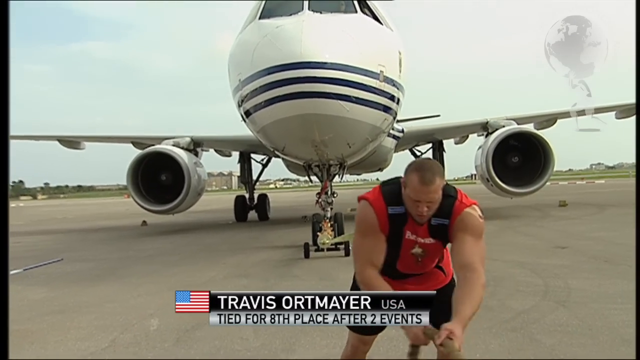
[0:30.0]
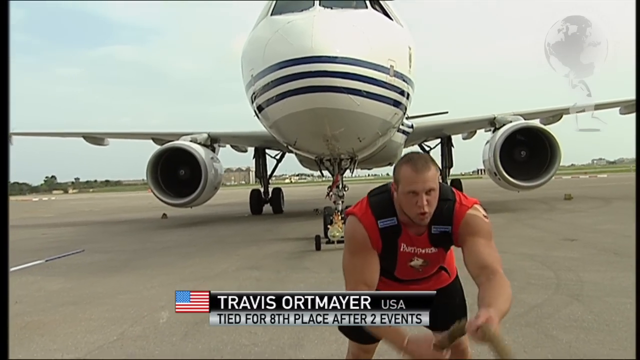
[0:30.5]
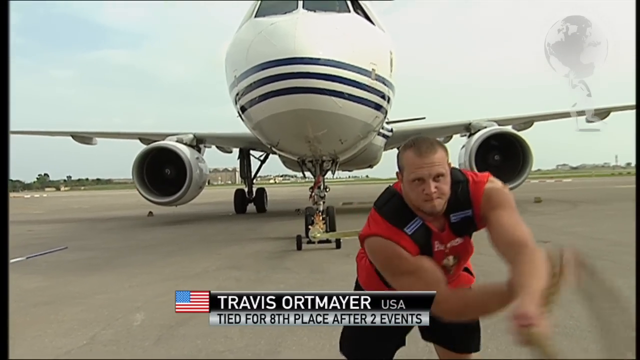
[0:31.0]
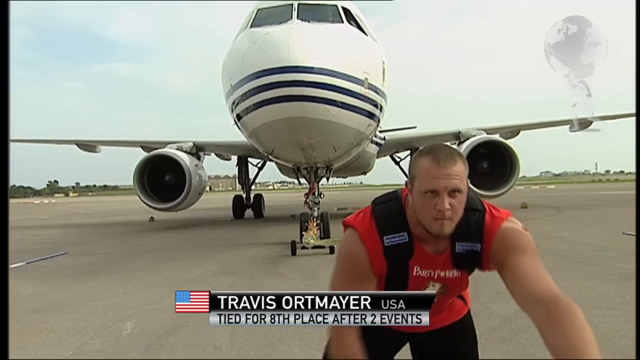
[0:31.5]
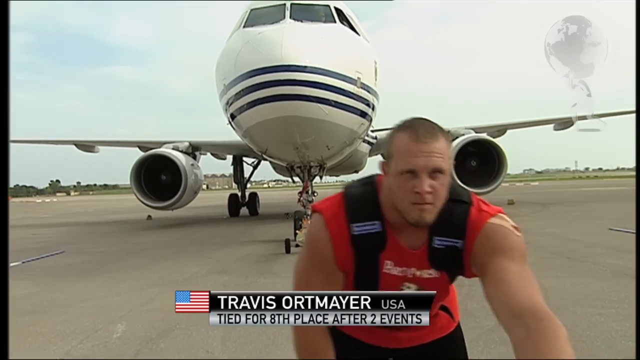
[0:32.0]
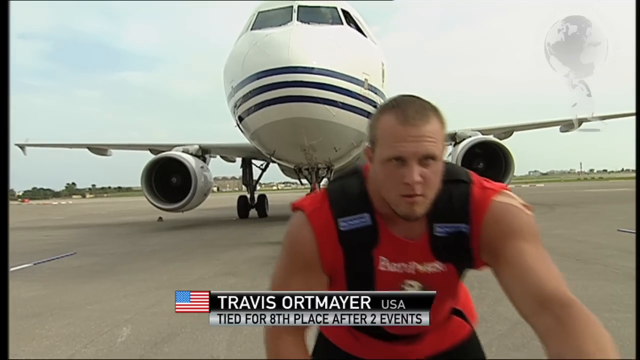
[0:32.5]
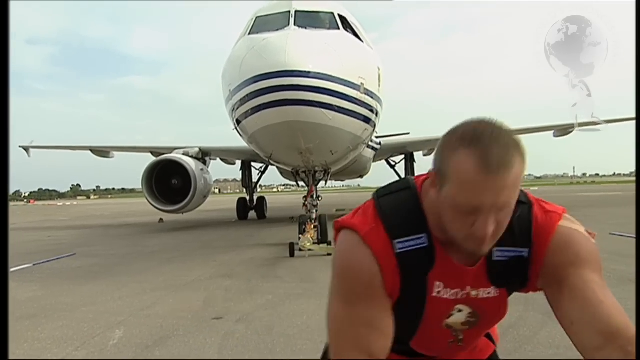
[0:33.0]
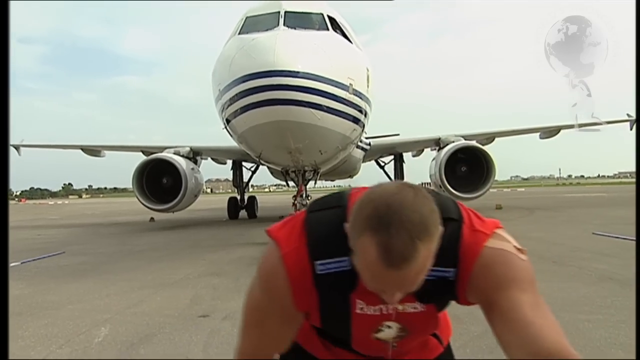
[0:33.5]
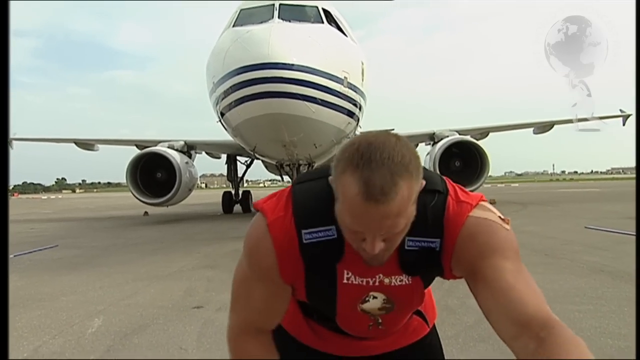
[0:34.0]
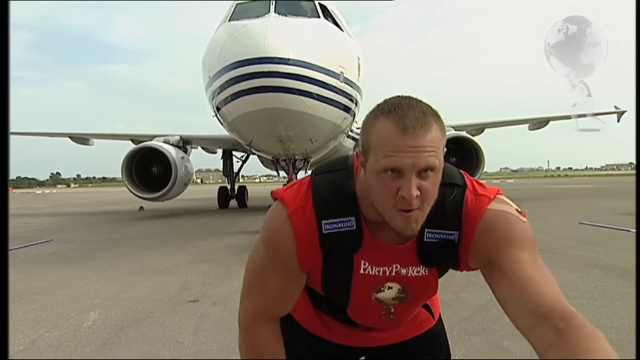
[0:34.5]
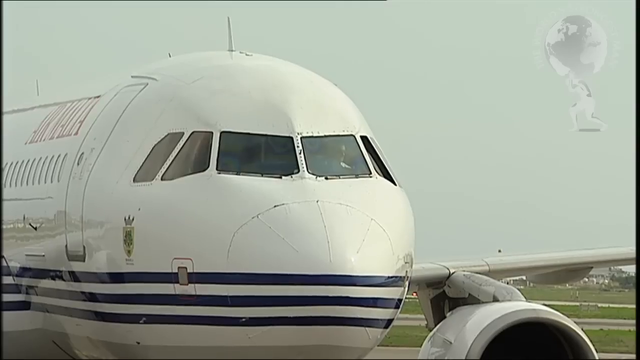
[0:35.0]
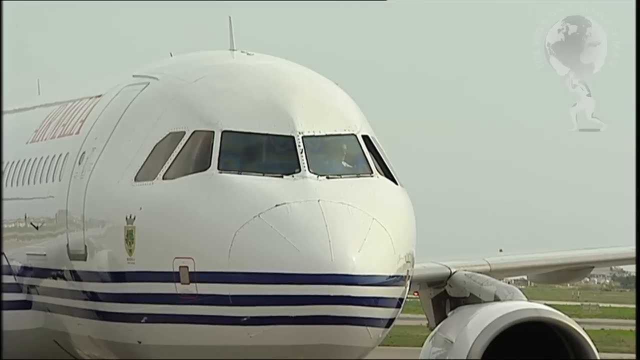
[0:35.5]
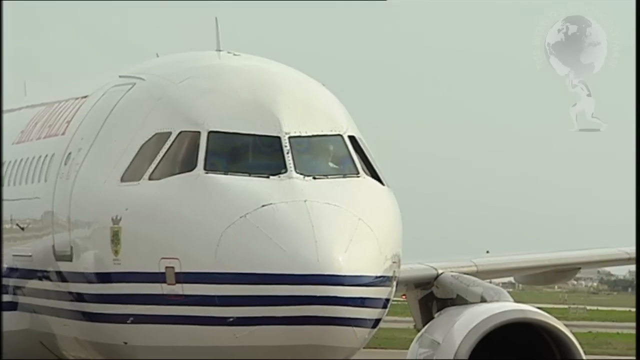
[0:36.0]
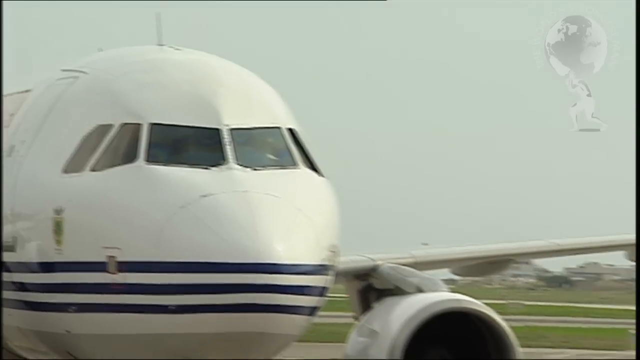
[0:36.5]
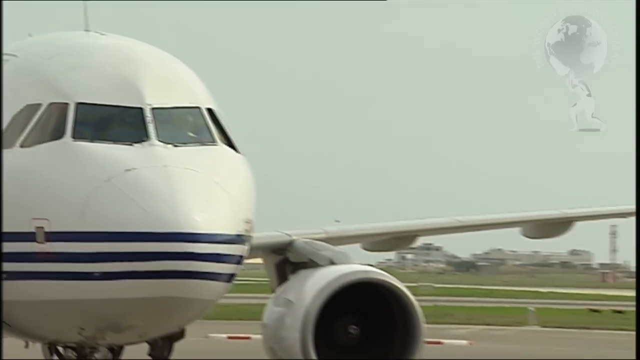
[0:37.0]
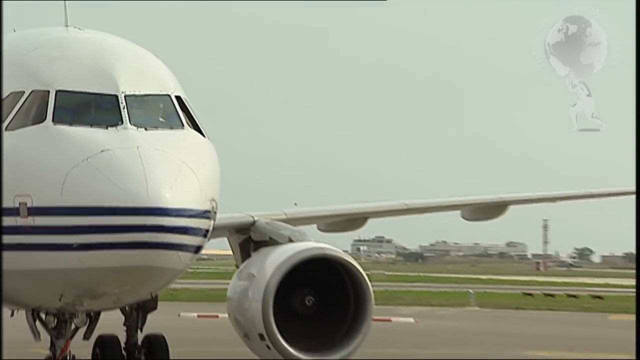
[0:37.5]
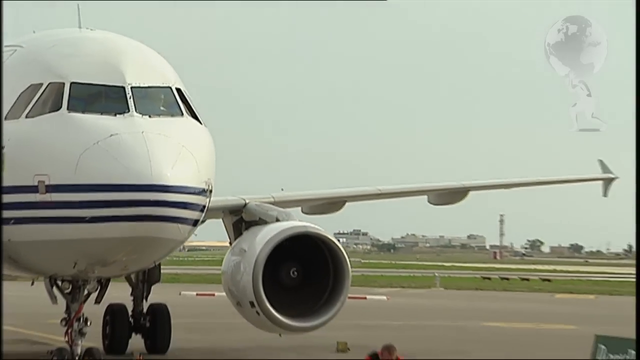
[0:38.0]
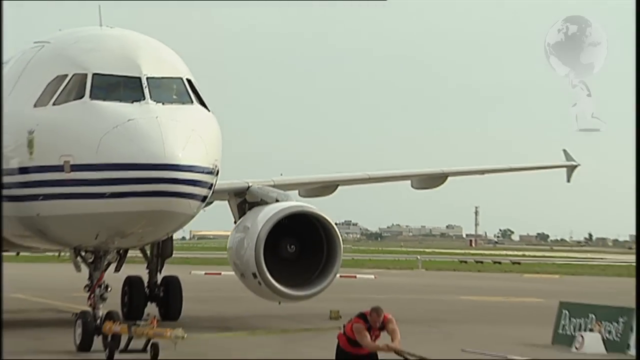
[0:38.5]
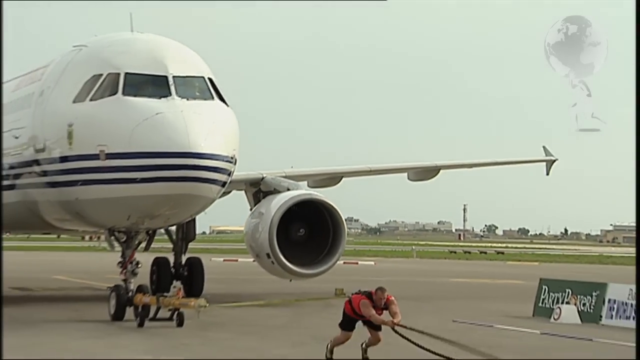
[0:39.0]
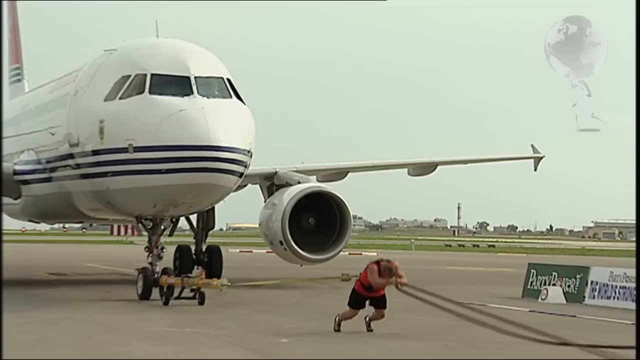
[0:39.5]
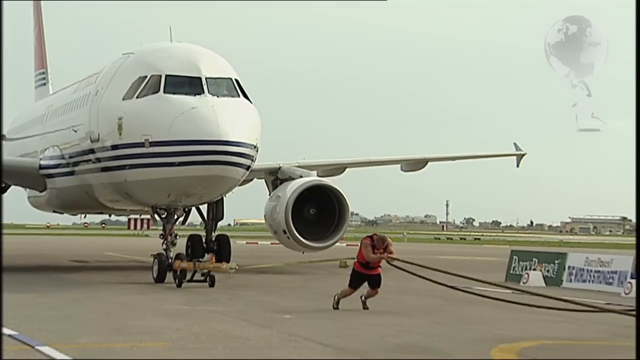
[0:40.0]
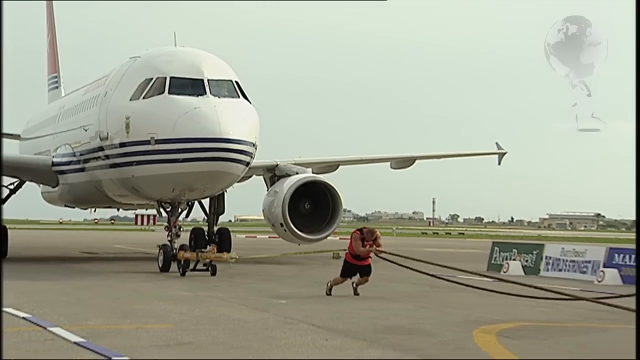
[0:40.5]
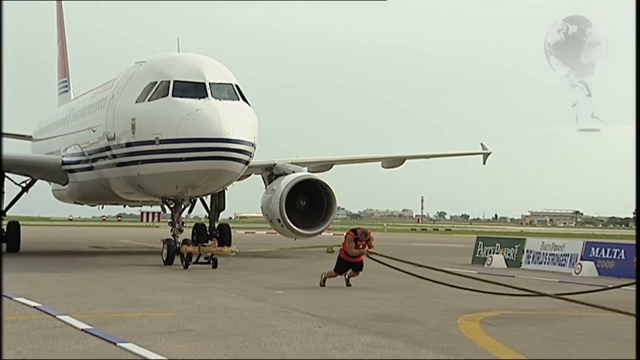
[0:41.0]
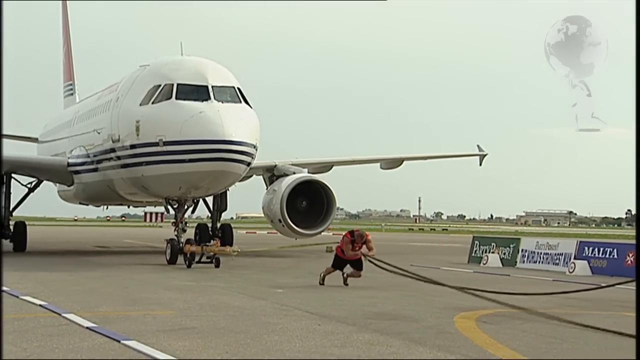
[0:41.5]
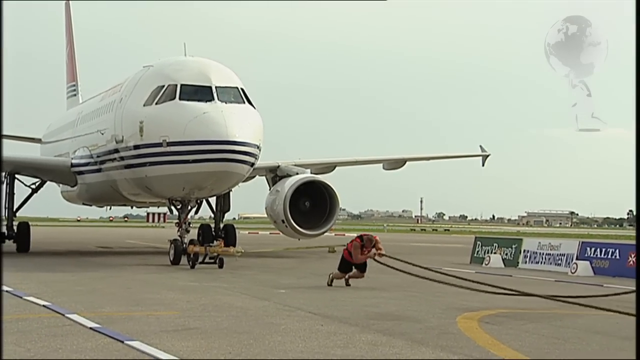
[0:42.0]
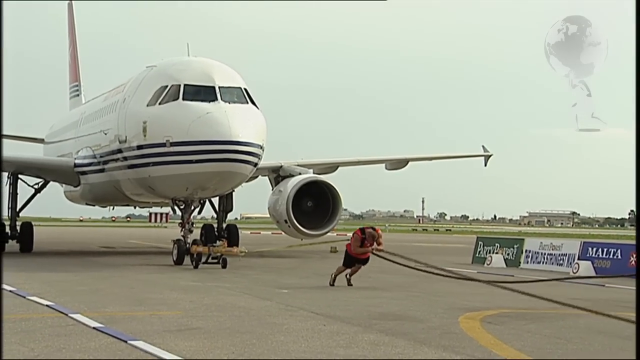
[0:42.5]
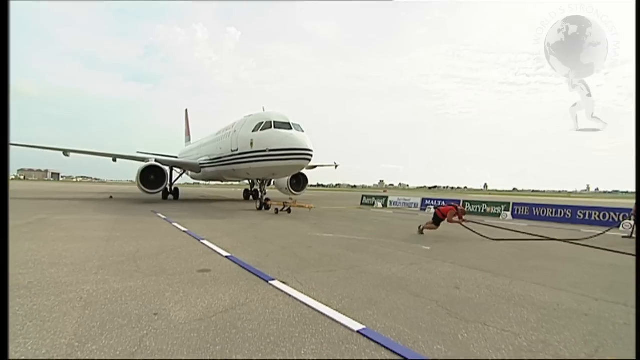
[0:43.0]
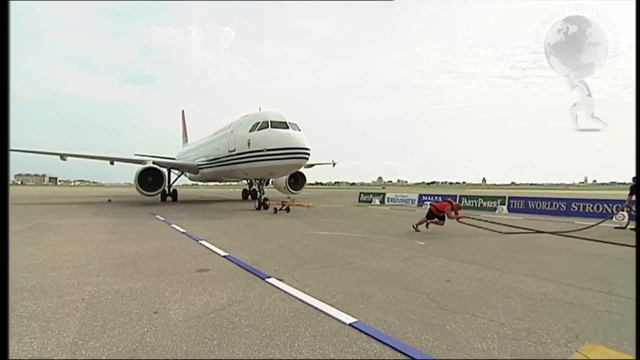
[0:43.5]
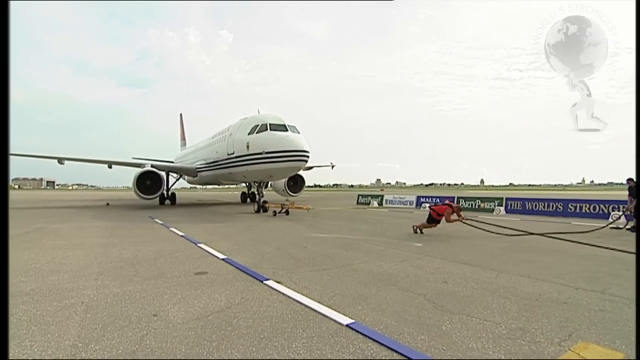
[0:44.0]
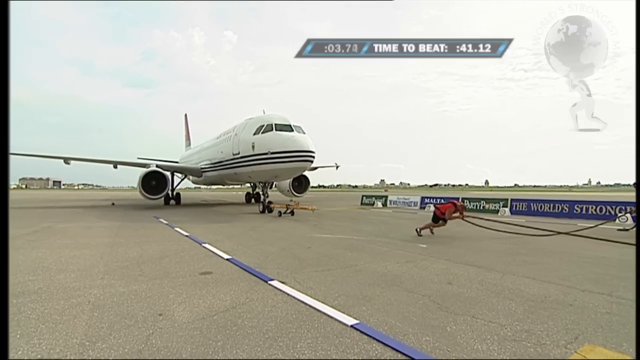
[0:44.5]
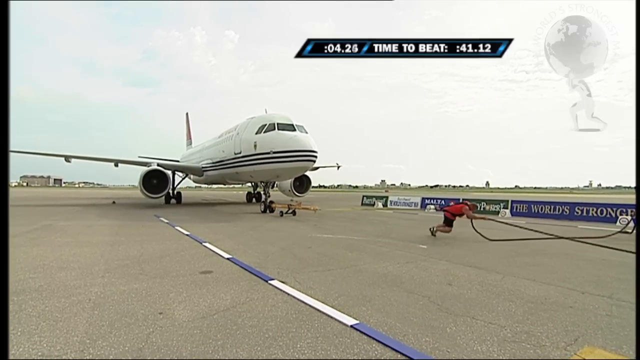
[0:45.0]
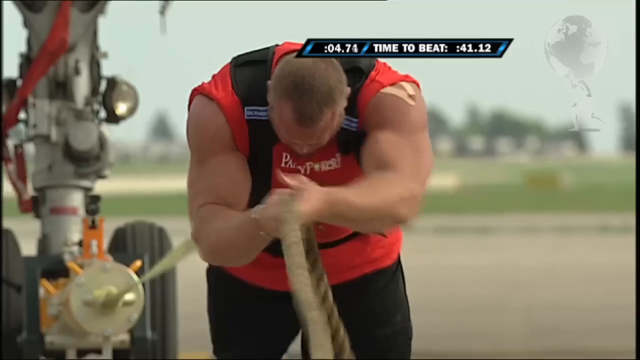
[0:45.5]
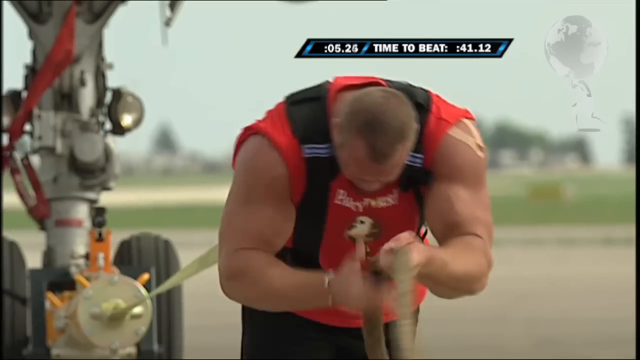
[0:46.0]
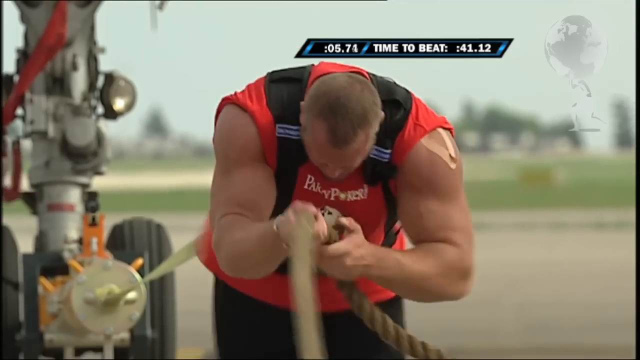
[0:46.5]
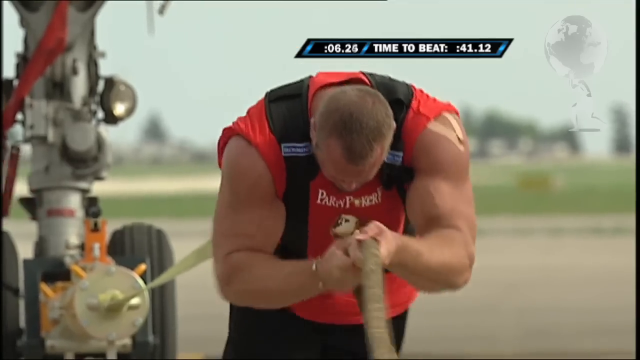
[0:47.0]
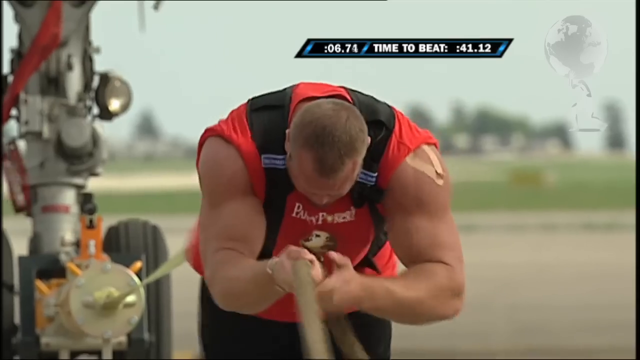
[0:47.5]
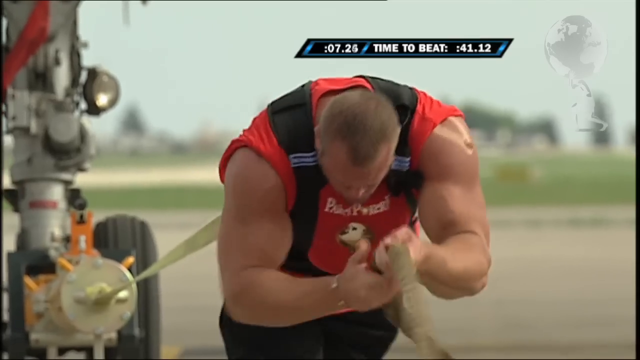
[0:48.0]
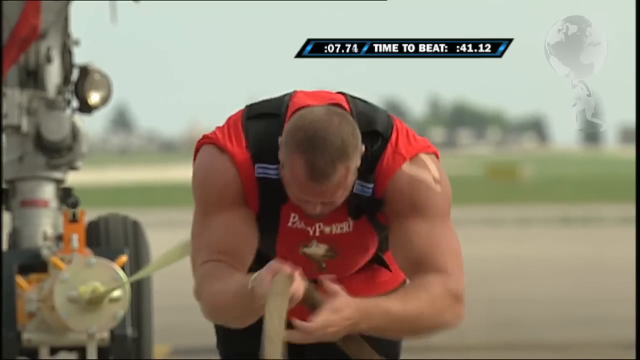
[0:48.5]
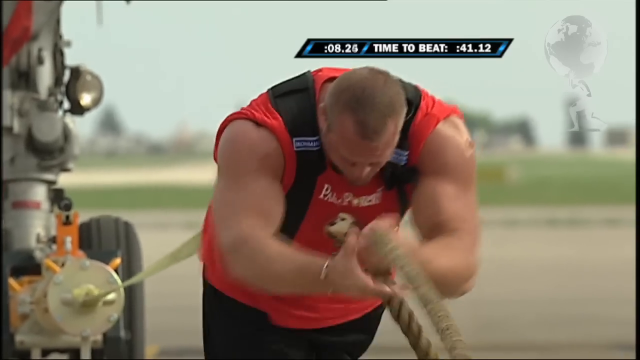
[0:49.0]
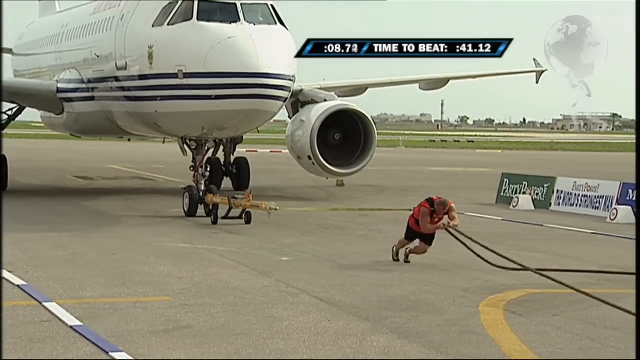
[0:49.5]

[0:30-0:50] Travis Ortmeier, a muscular man in a red shirt, takes part in the plane pull event of the World's Strongest Man competition. A black harness tied around him is attached to a large airplane behind him on an airfield runway. He holds on to another rope to steady himself and walks forward, dragging the airplane behind him. A wide shot shows the size of the plane compared to Ortmeier; it towers over him. Leaning ahead and holding the rope, he moves step by step, pulling the 44-ton plane down the runway.